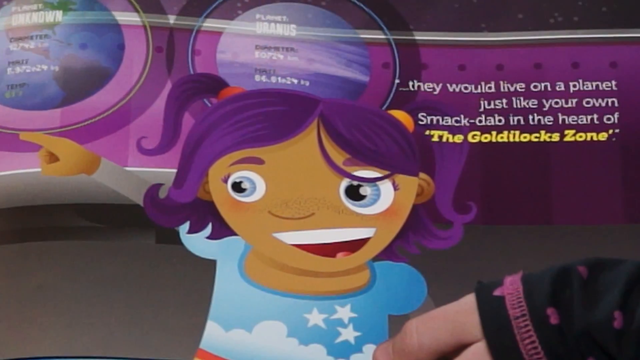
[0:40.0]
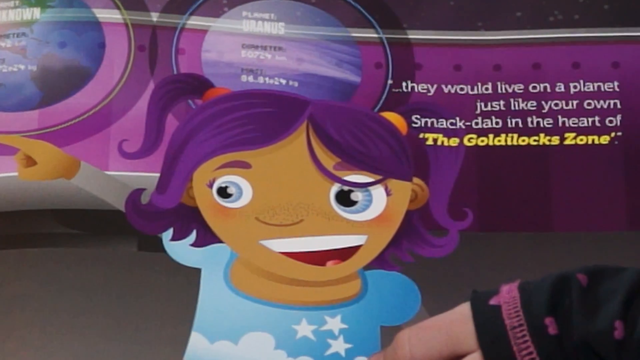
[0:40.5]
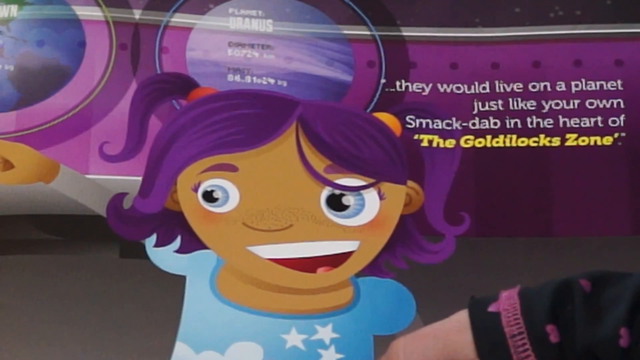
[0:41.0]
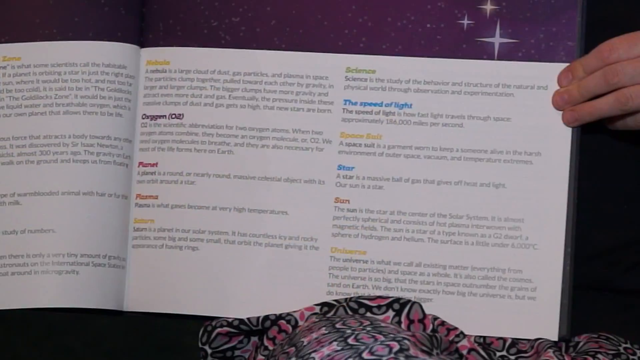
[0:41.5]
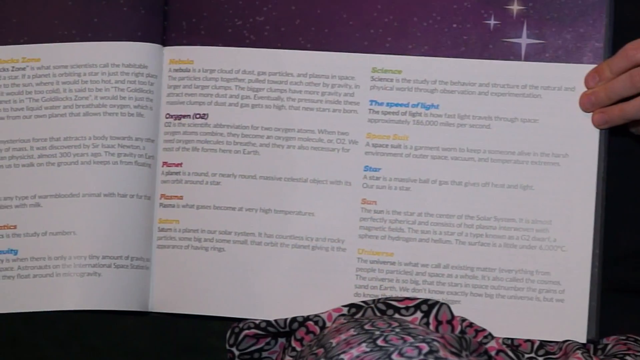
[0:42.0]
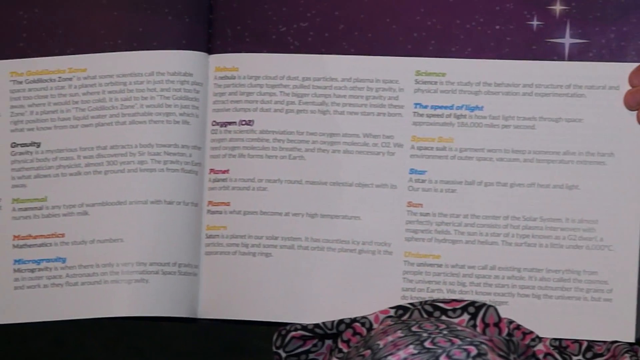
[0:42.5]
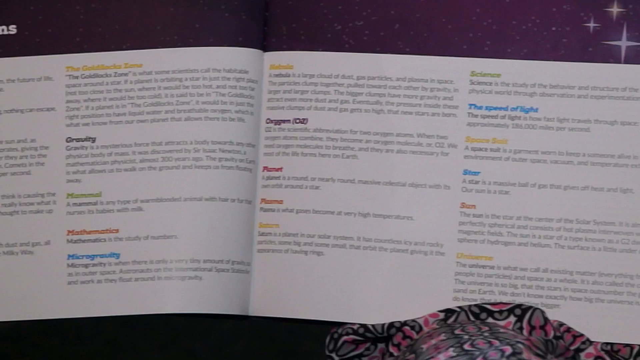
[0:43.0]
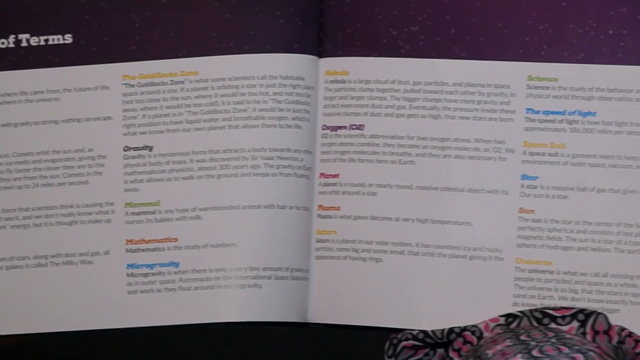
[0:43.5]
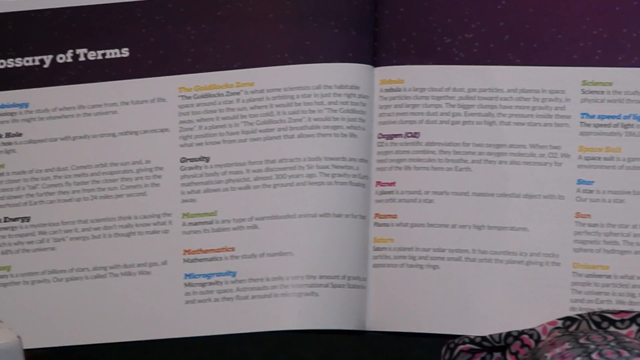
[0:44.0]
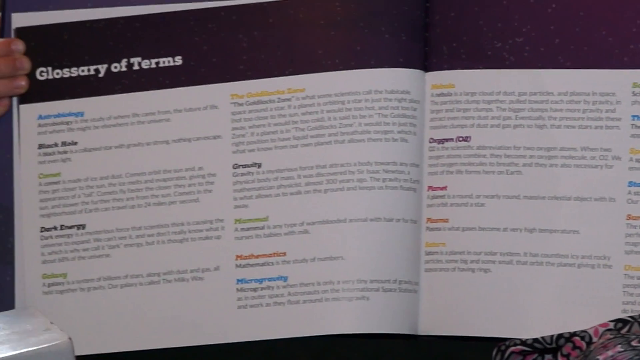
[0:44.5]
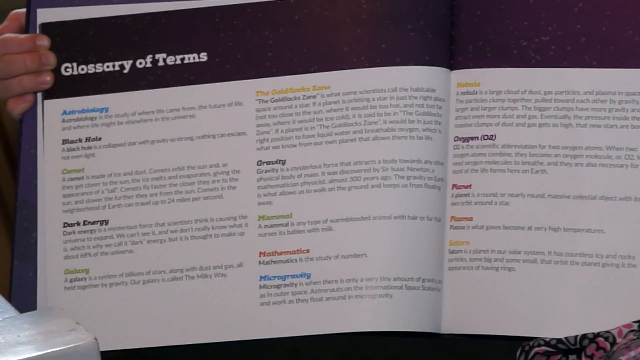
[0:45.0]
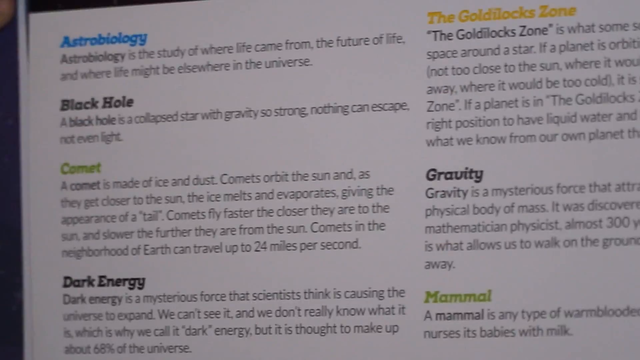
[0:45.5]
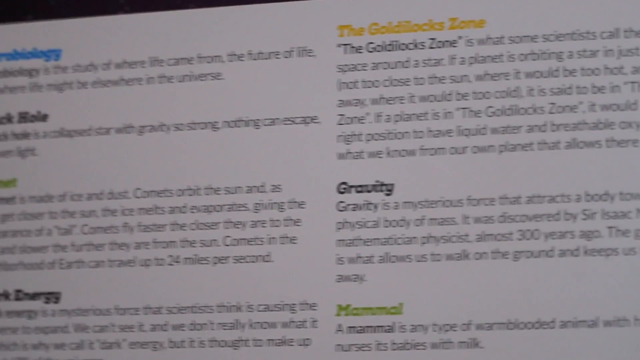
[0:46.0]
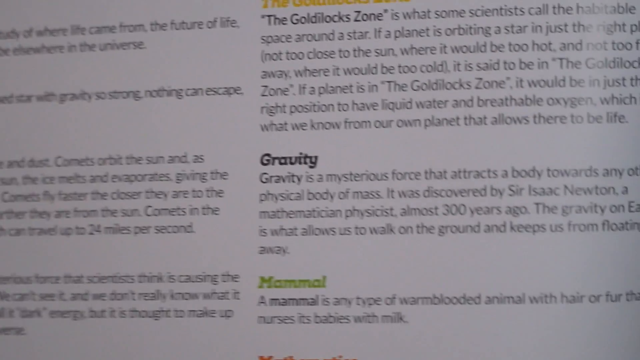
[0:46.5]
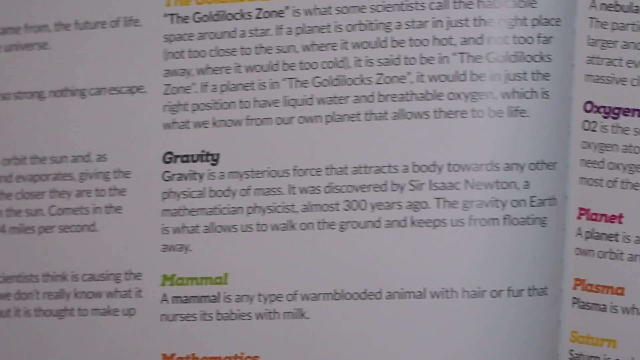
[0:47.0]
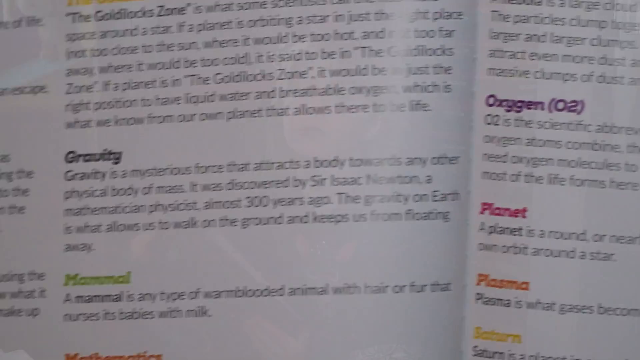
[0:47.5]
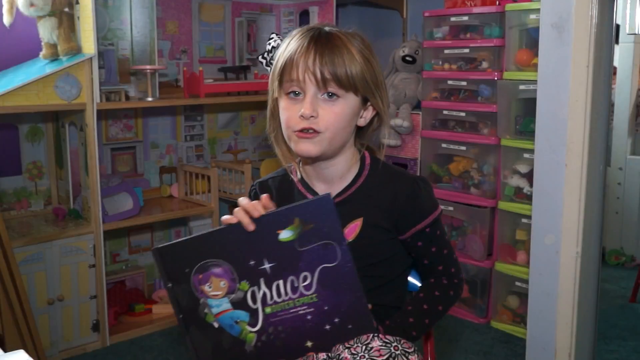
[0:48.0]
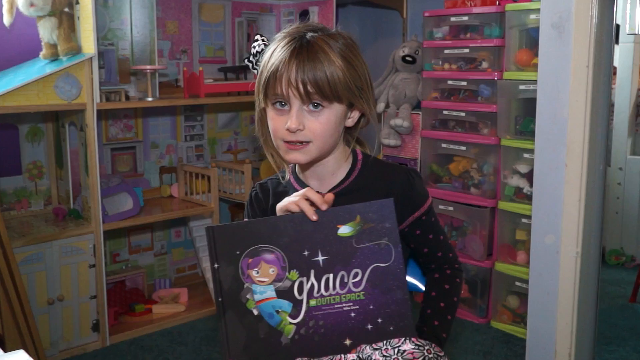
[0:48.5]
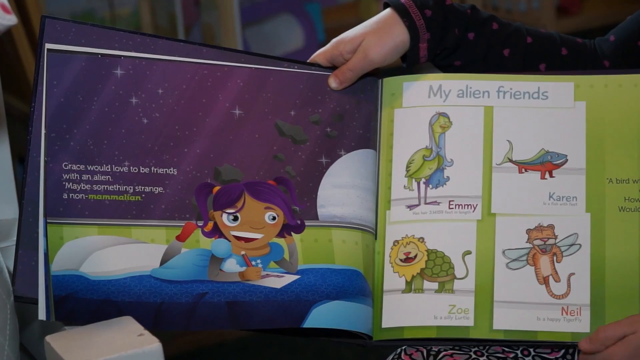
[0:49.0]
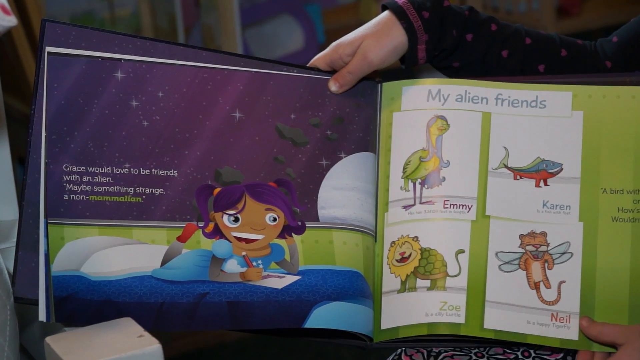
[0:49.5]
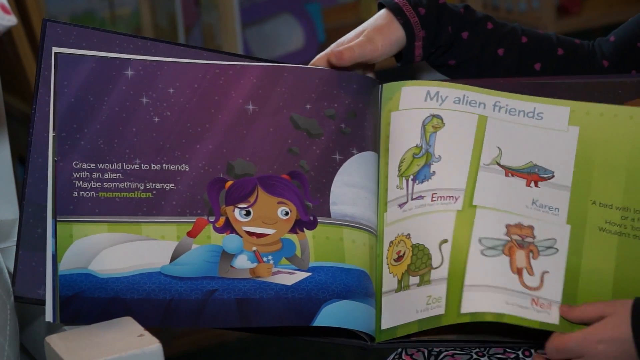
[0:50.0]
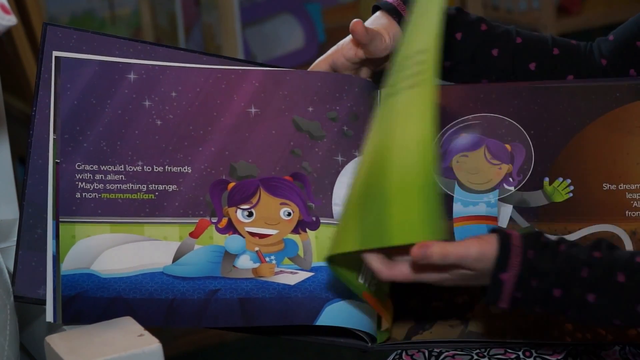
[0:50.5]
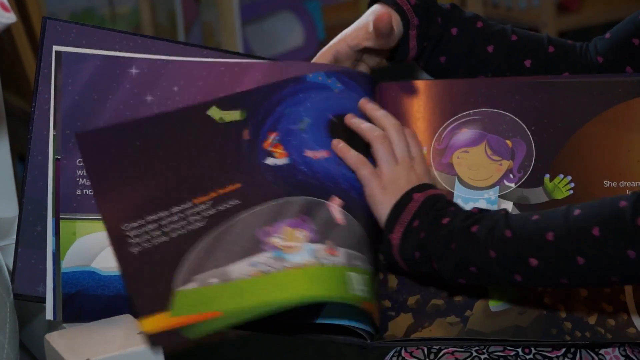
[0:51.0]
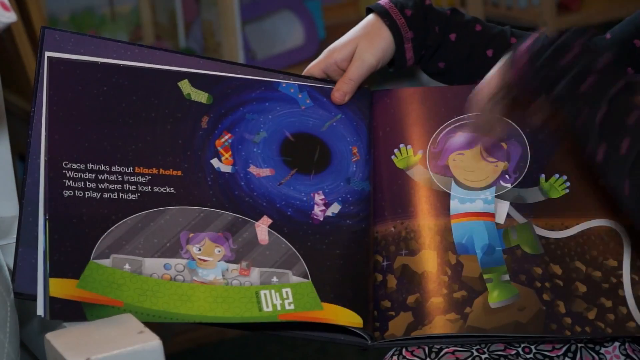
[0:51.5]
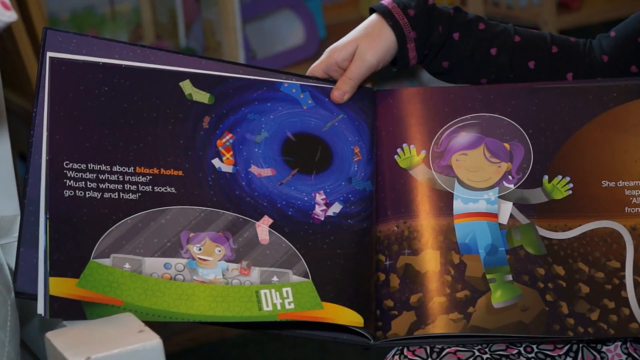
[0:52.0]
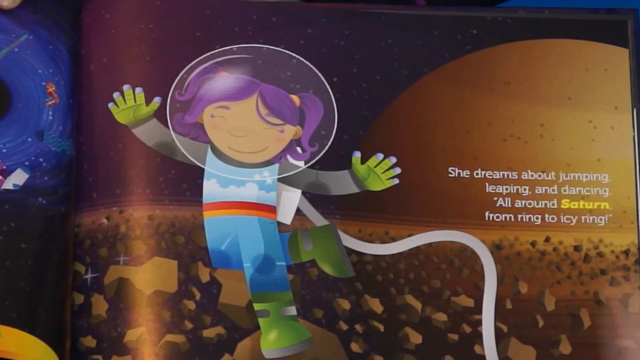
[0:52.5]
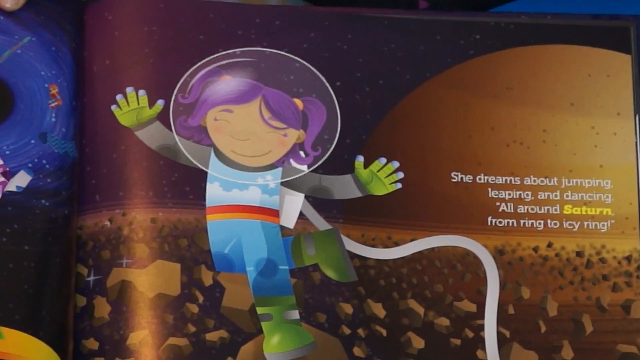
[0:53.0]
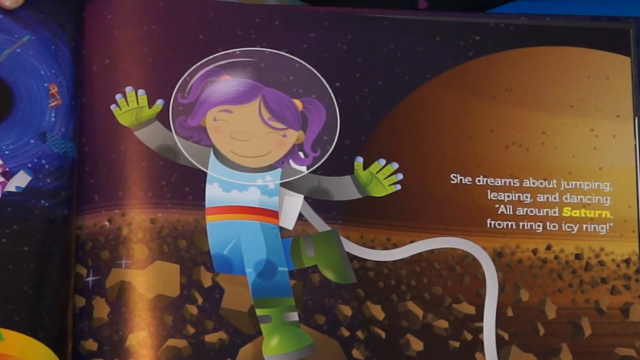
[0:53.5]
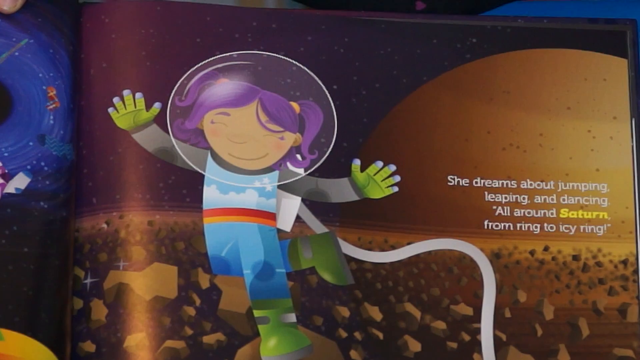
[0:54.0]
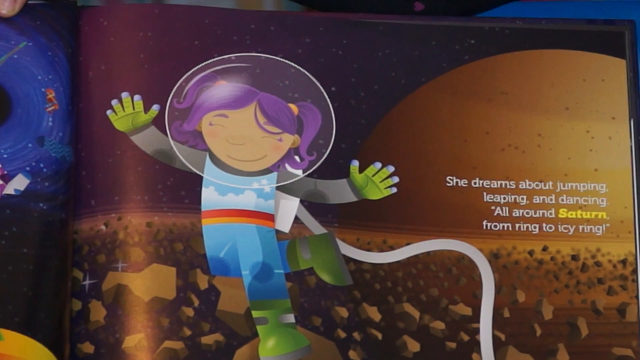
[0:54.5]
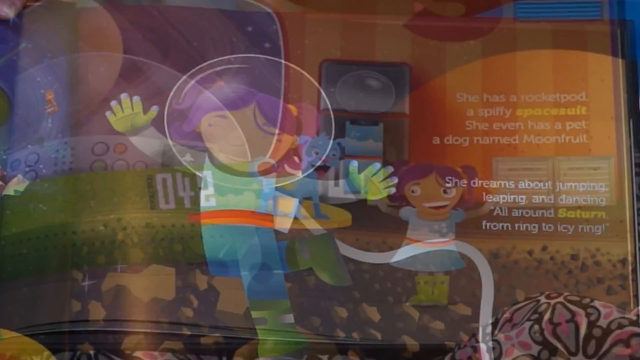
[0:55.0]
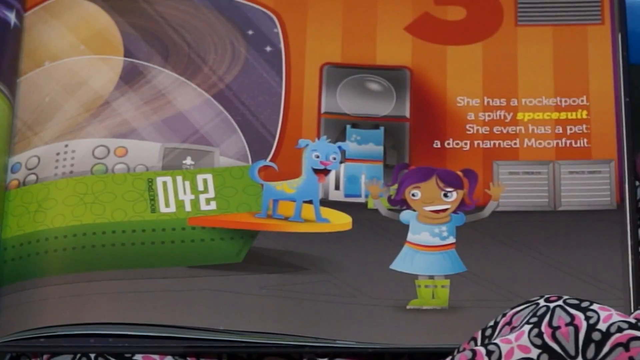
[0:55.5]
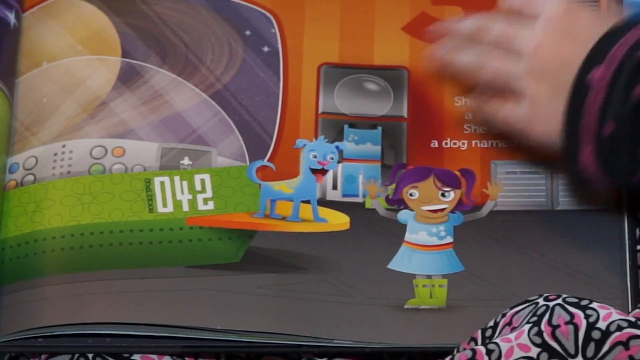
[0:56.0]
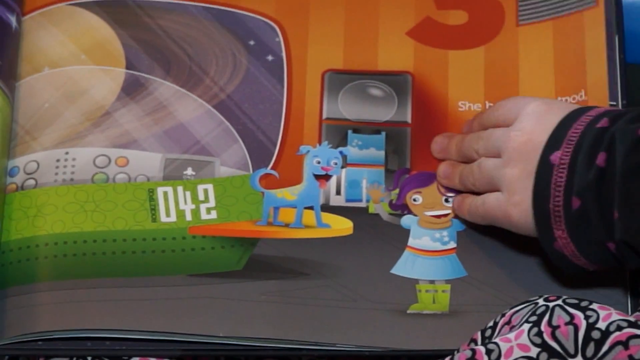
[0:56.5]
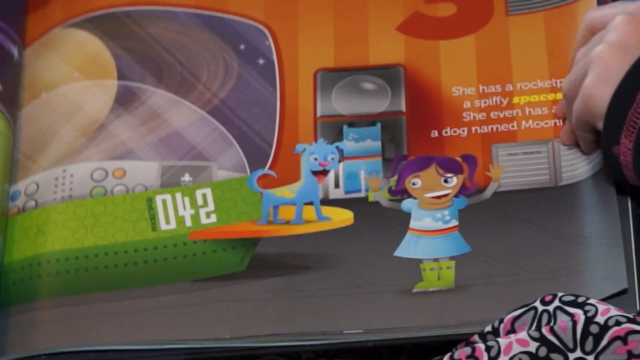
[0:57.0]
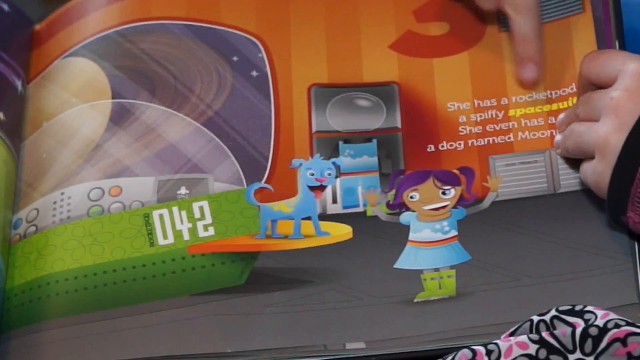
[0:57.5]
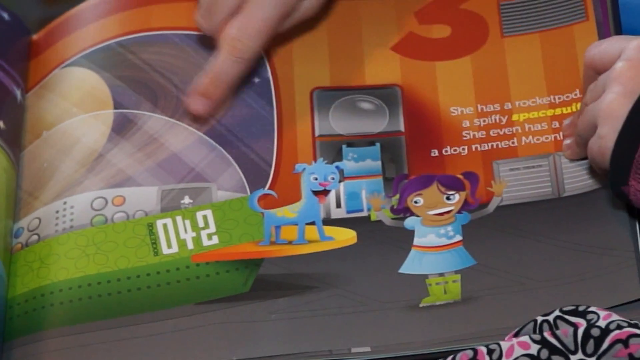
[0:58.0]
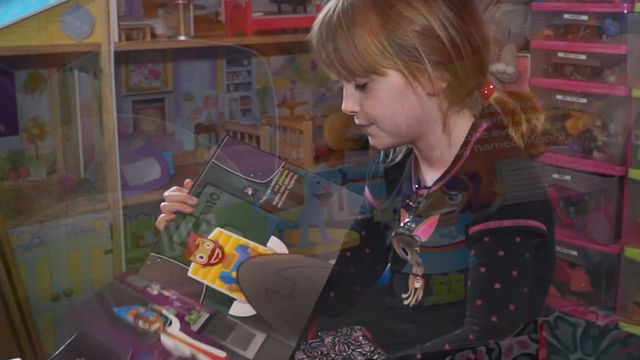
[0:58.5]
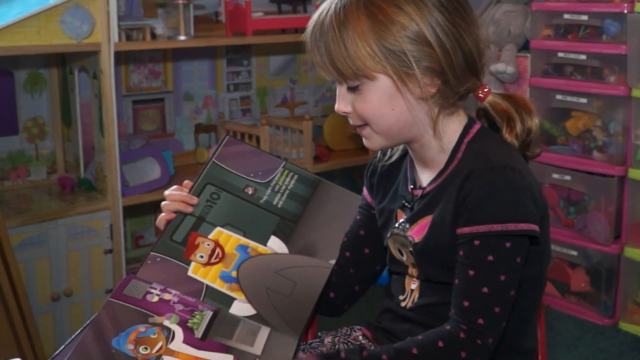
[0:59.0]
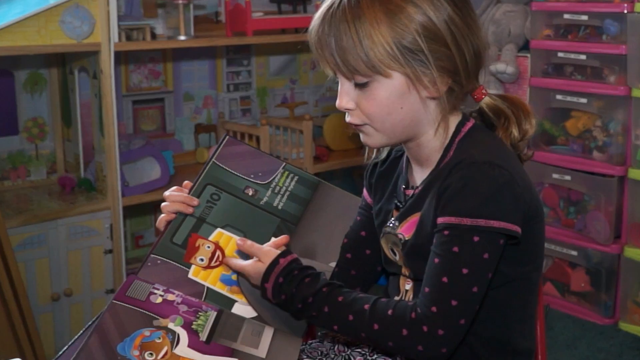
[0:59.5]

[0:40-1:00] The girl shows the book Grace, with the young female astronaut whose purple hair is in bunches; one of the astronaut's eyes is bigger than the other. A detailed page gives lots of details about chemicals, gases and energy; it is a glossary of terms explaining things like dark energy, gravity and the Goldilocks zone. The girl shows more pages, including one where the young purple-haired astronaut explores black holes and one about how she dreams of jumping, leaping and dancing all around Saturn from ring to icy ring. Another page reveals that the dog's name is Moon, and the girl points this out as a picture shows Moon sitting on the wing of the spaceship. Next the girl shows a page about the Goldilocks zone, and then shows the glossary of terms again. Another page shows "my alien friends" with four pictures of aliens: an ostrich-looking friend called Emmy with long hair, a fish with legs called Karen, a tortoise with a head like a lion called Zoe, and a tiger with wings called Neil.